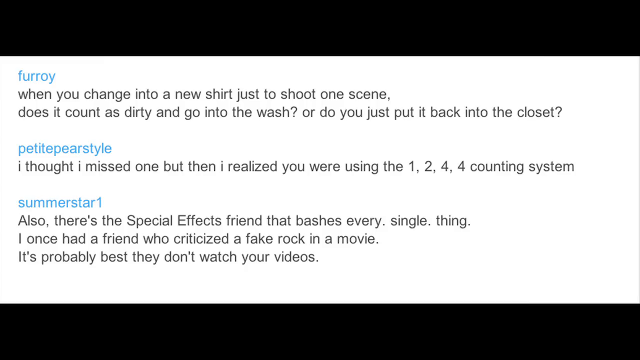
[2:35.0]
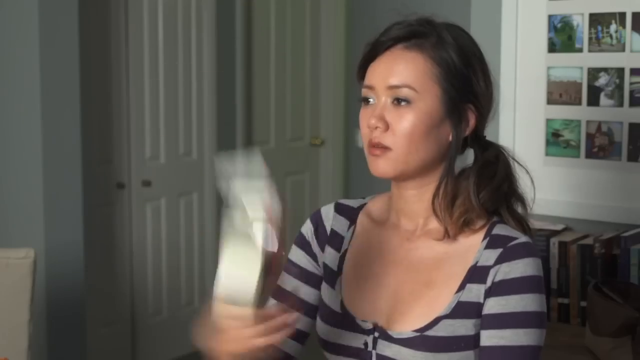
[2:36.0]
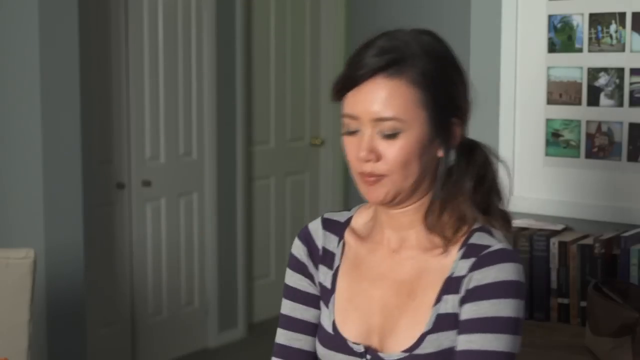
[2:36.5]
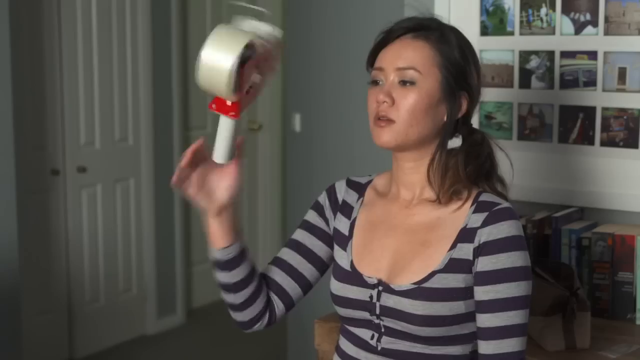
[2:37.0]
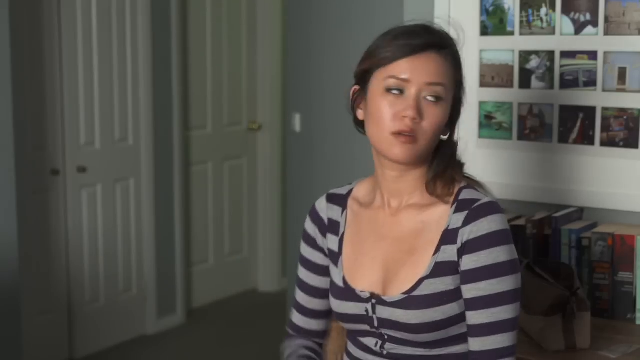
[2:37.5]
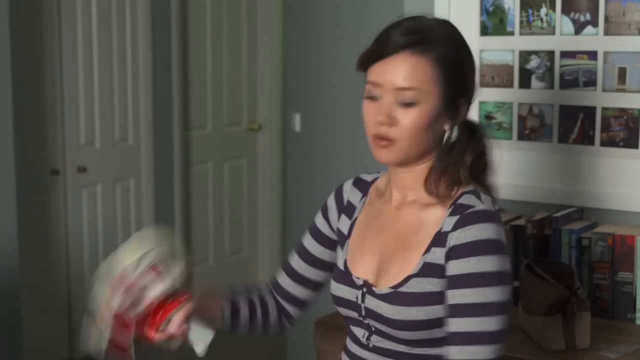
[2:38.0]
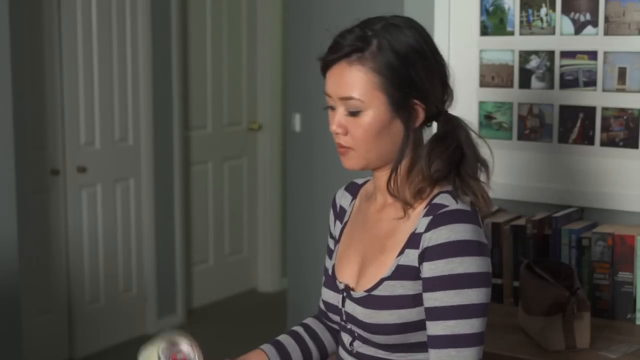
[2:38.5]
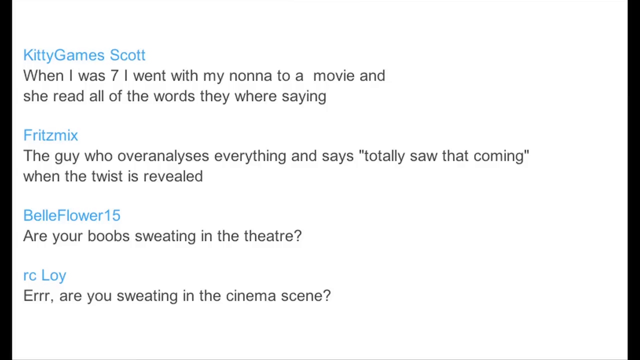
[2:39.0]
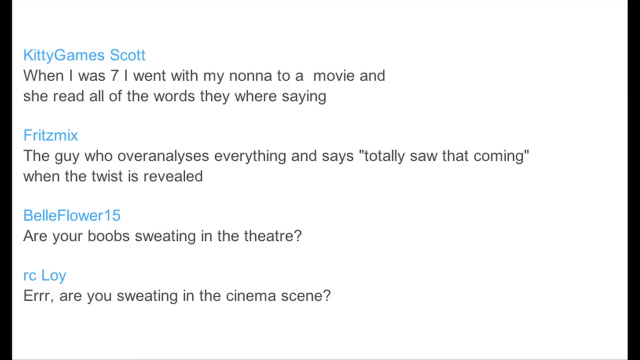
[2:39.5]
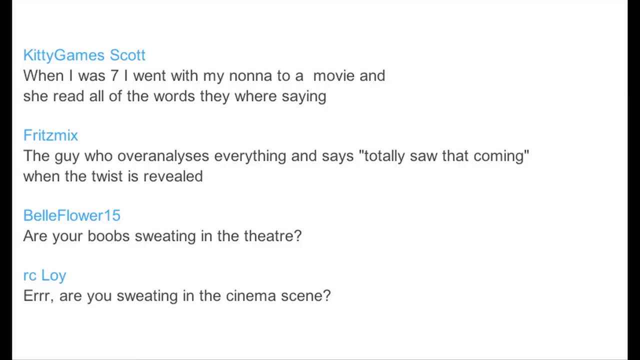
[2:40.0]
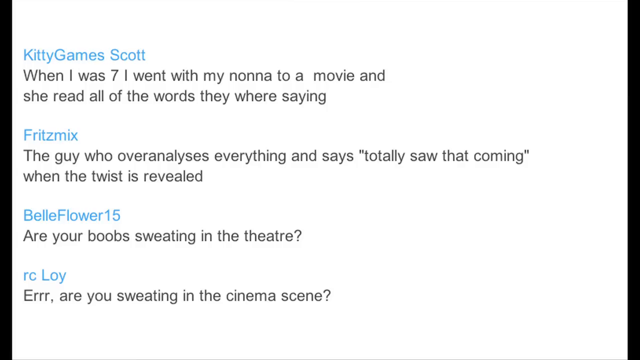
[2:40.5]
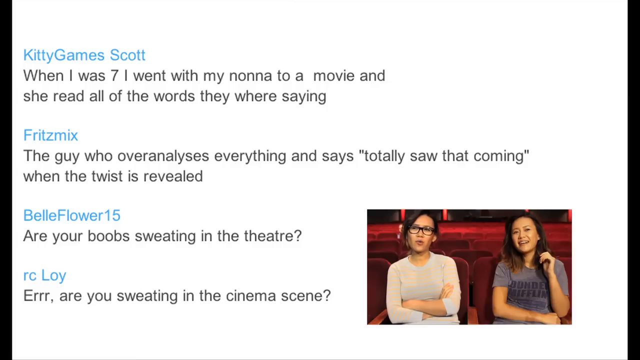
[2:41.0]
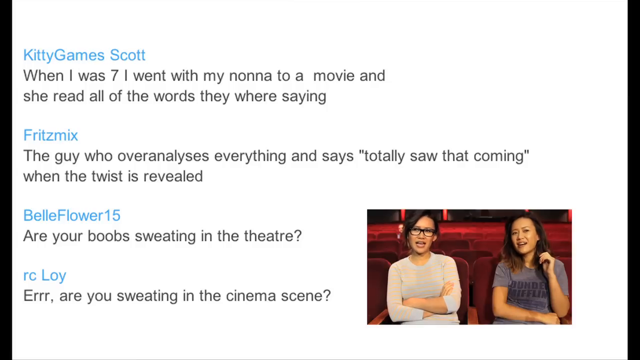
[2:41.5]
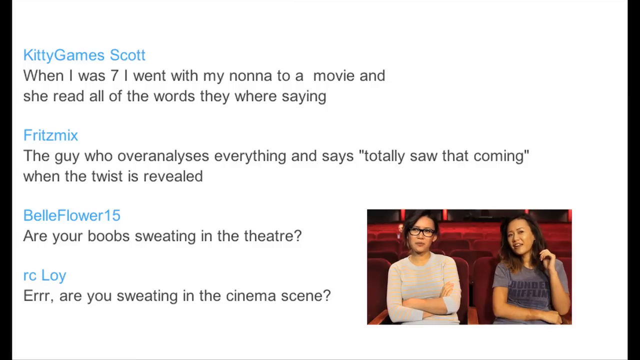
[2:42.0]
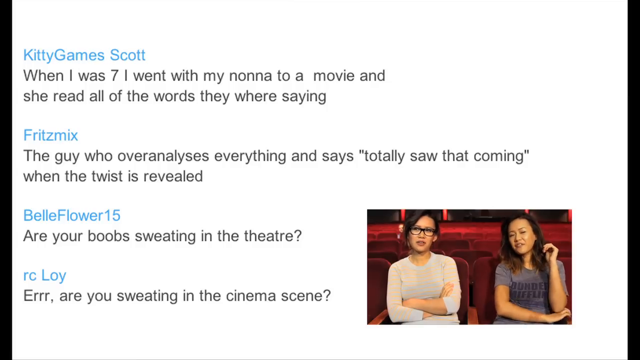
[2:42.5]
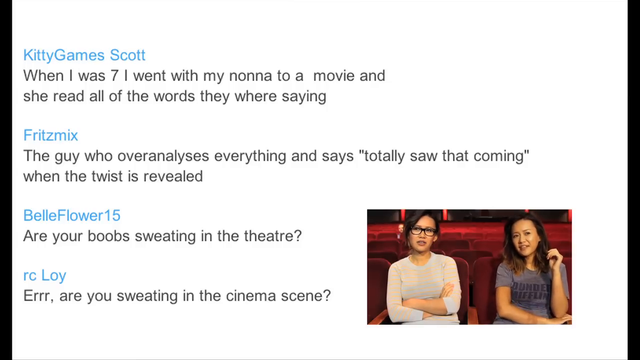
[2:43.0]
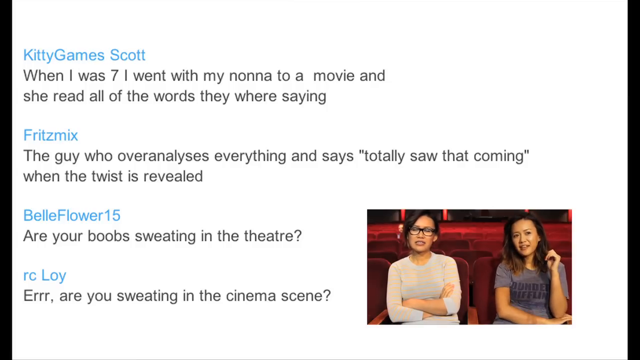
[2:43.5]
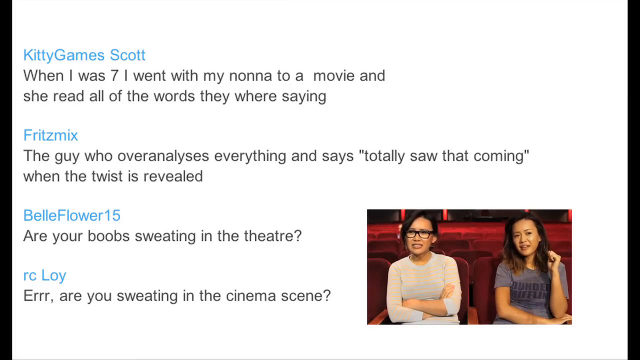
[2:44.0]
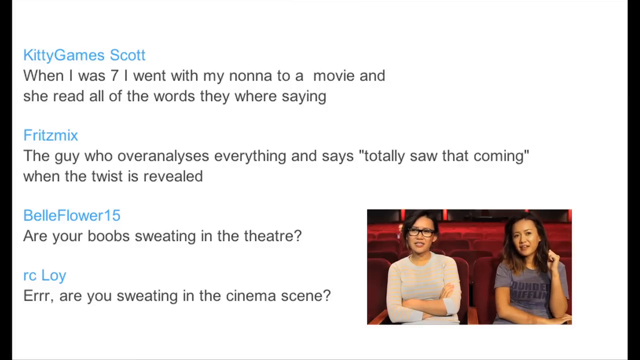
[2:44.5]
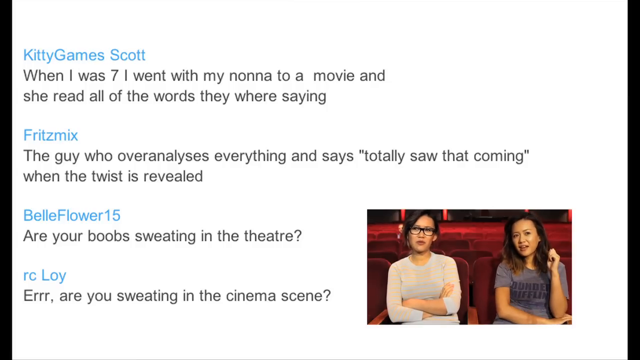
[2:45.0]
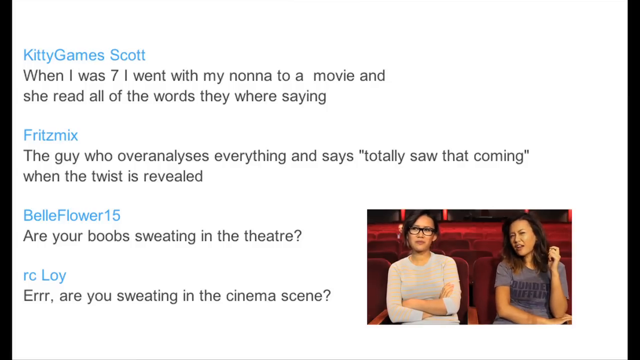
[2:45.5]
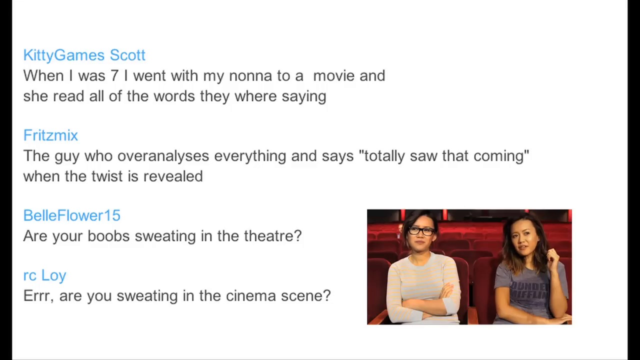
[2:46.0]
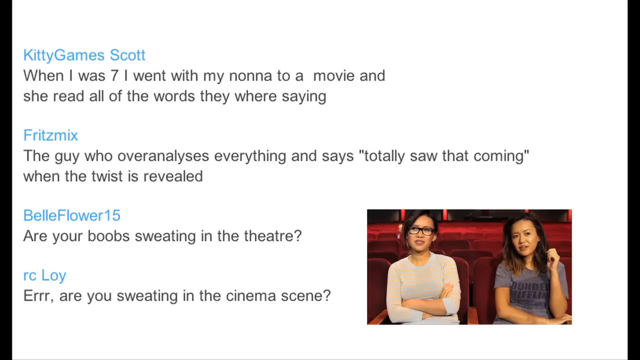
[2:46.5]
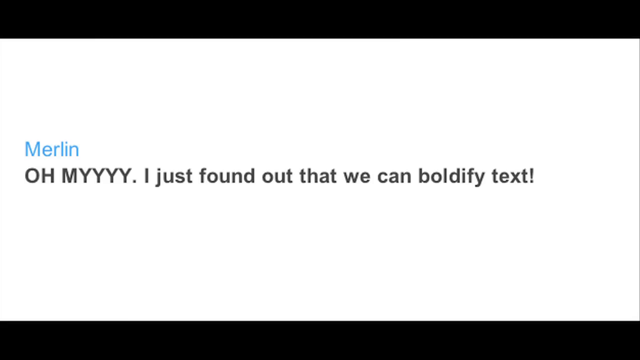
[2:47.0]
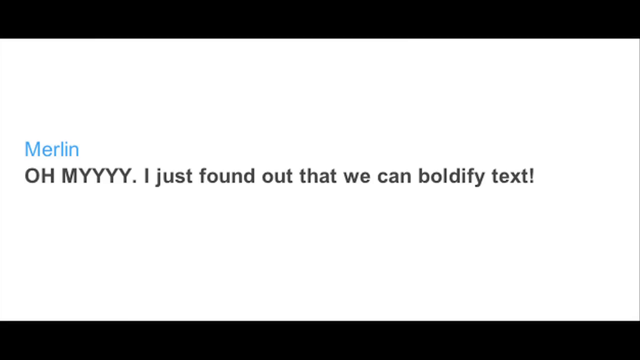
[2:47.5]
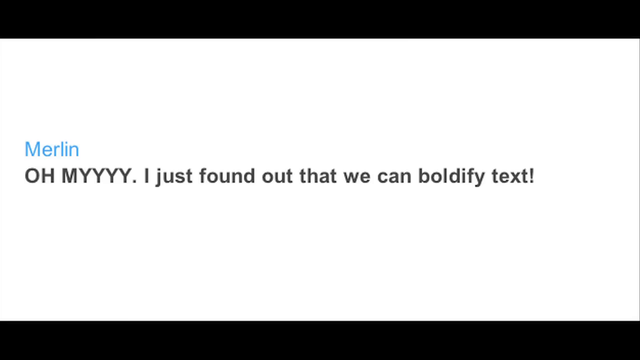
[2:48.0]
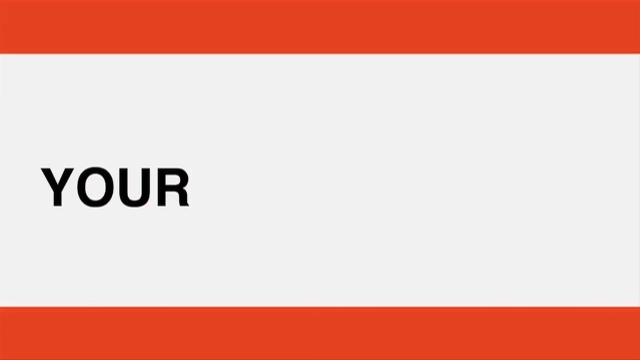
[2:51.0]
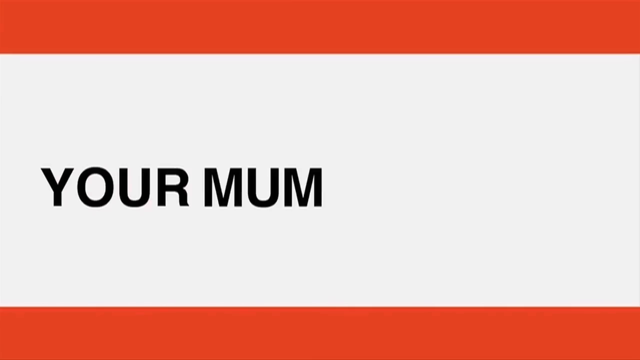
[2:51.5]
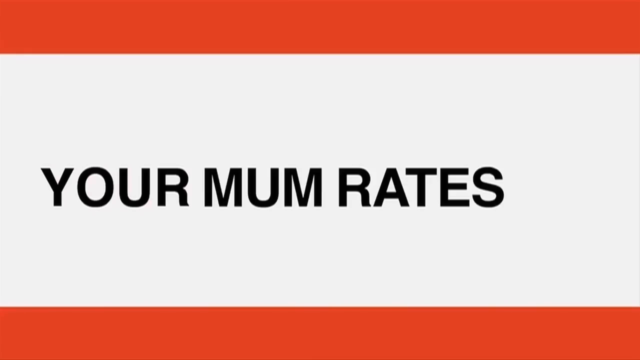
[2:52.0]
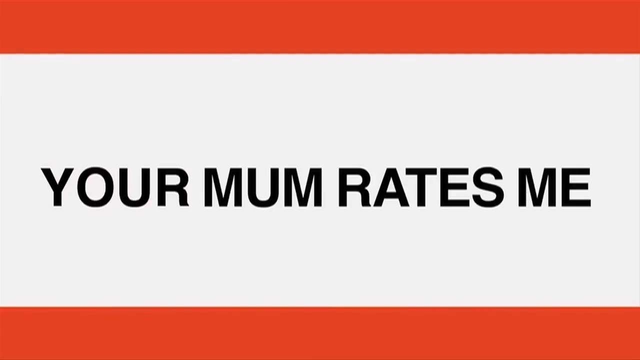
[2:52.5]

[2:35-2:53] Writing appears, then the girl in the striped black shirt tosses the thing up in the air. More writing appears with a picture of two women in the lower right-hand side, then large writing, then the girl tossing the tape thing in the air, then more writing with blue on top and black underneath, and the two girls talking. Slightly larger text follows, then large text that says "your mom rates me". The writing is apparently a conversation, with the blue showing who is talking and the black showing what they say. The girl in the striped black and gray shirt keeps tossing the tape thing in the air as the sequence repeats. Text says "Merlin" followed by words that move too quickly to read. The little rectangle with the two girls appears in the lower right-hand side, along with "Merlin", "oh my, I found out that we can boldify text", and then large letters that say "your mom rates me".